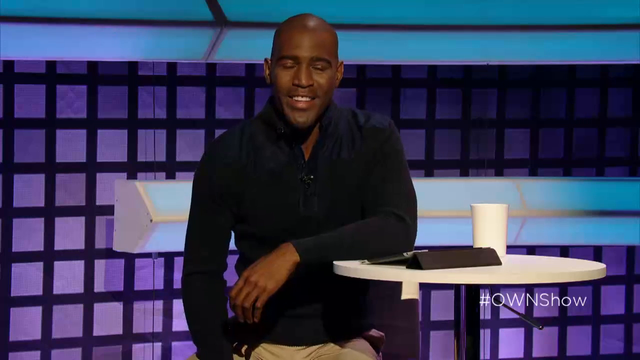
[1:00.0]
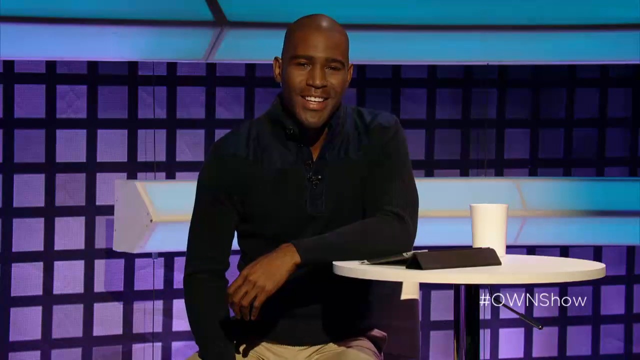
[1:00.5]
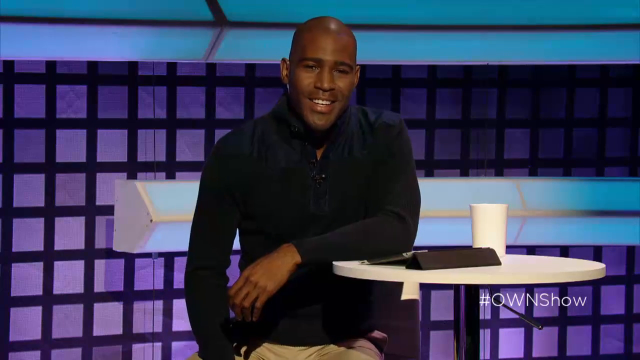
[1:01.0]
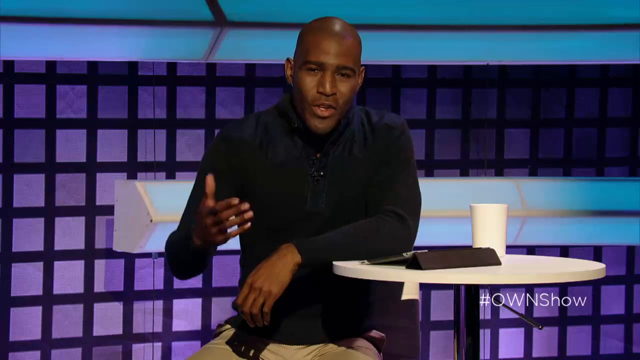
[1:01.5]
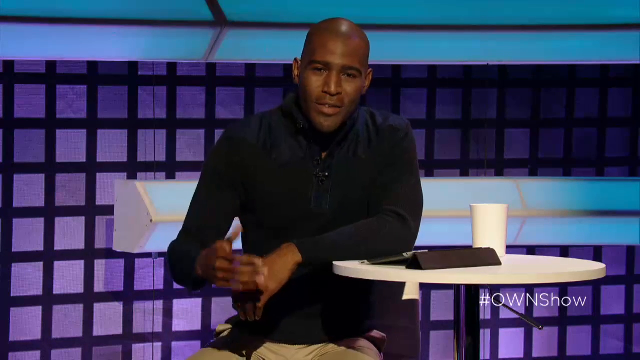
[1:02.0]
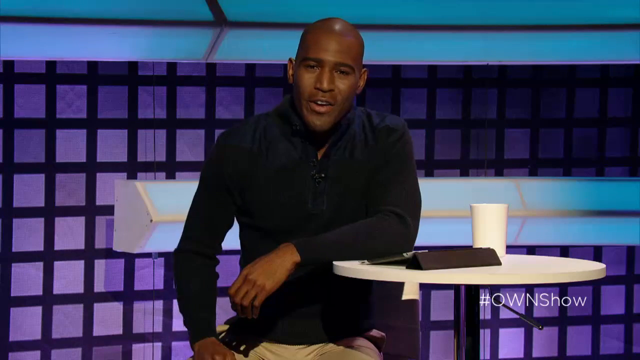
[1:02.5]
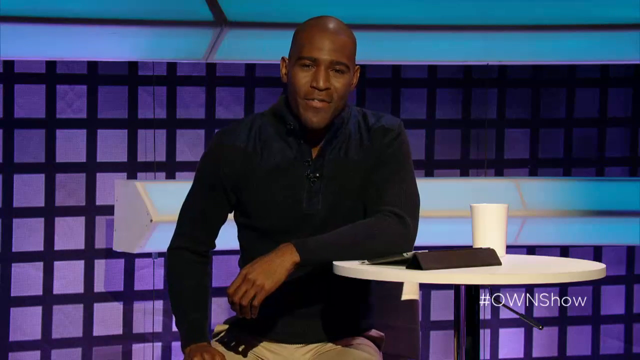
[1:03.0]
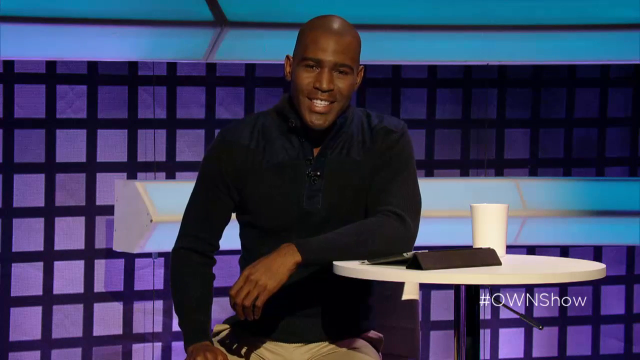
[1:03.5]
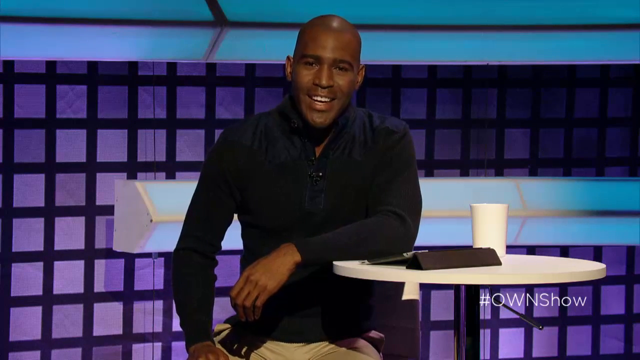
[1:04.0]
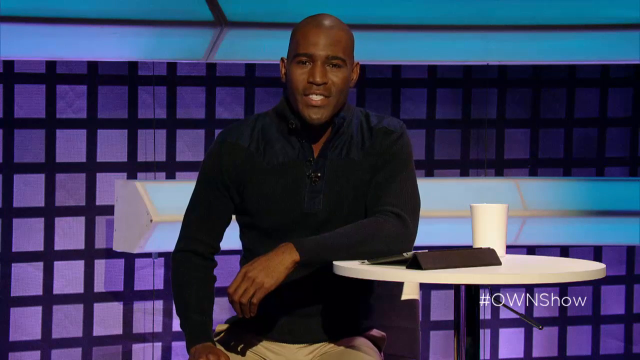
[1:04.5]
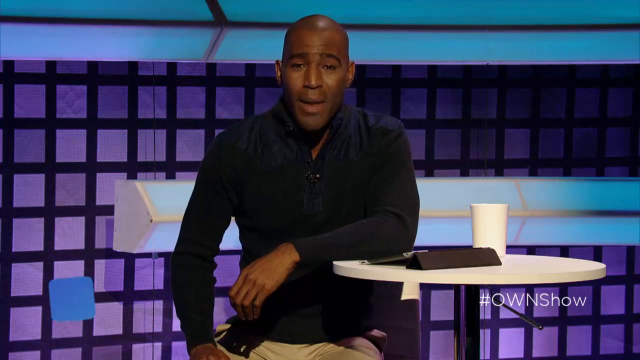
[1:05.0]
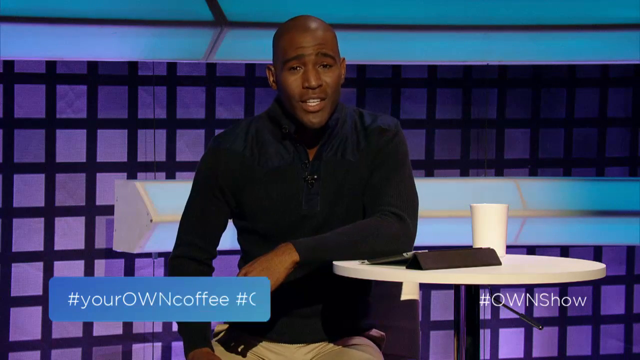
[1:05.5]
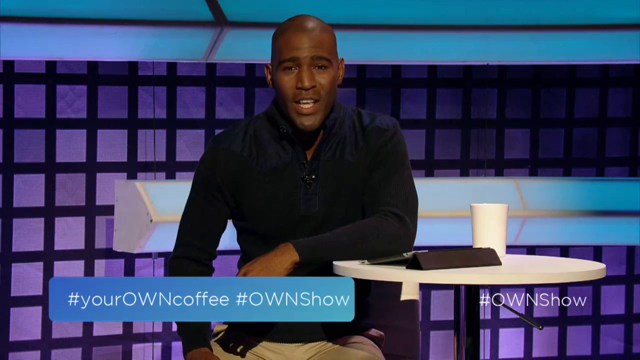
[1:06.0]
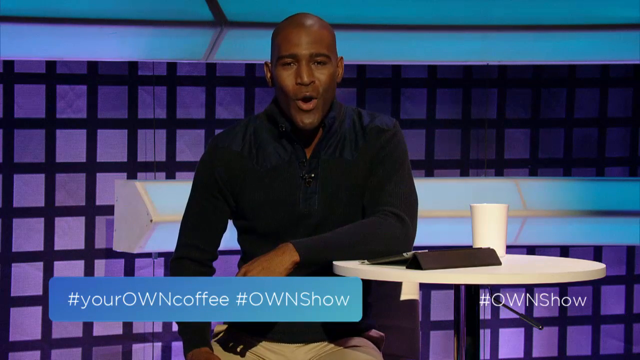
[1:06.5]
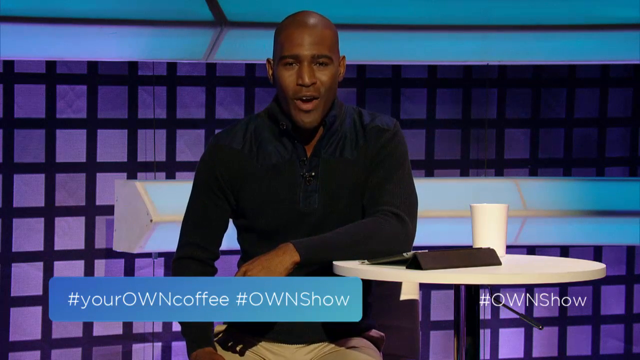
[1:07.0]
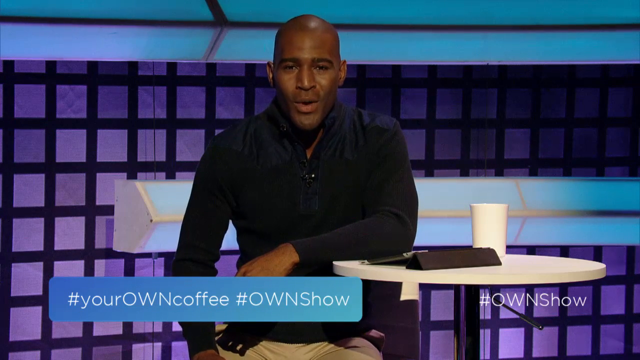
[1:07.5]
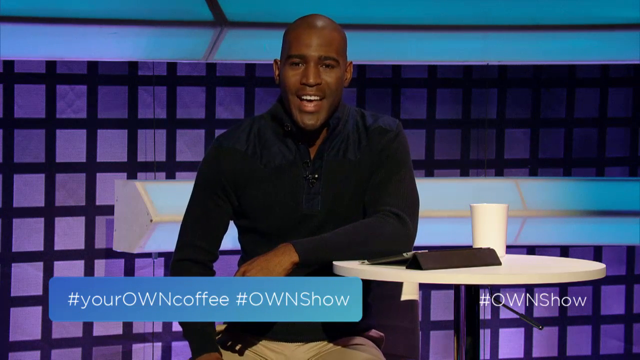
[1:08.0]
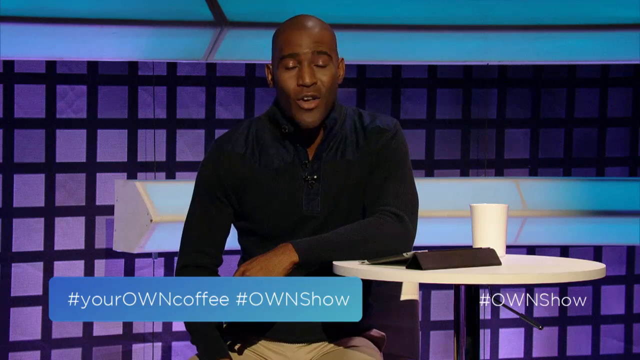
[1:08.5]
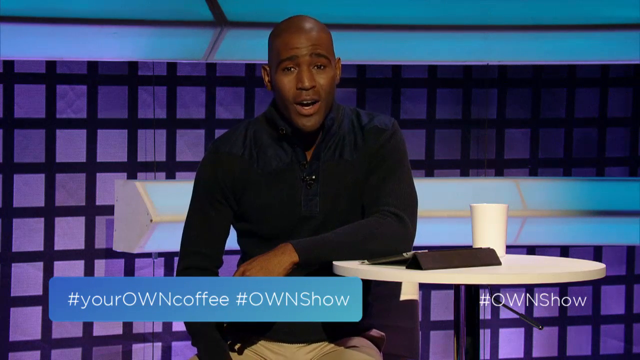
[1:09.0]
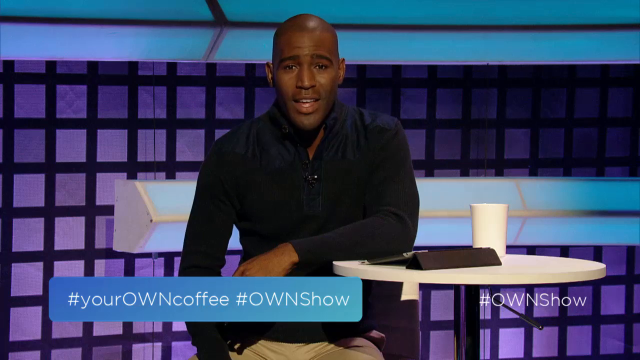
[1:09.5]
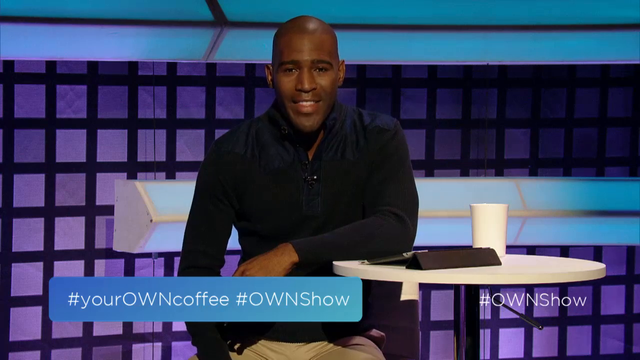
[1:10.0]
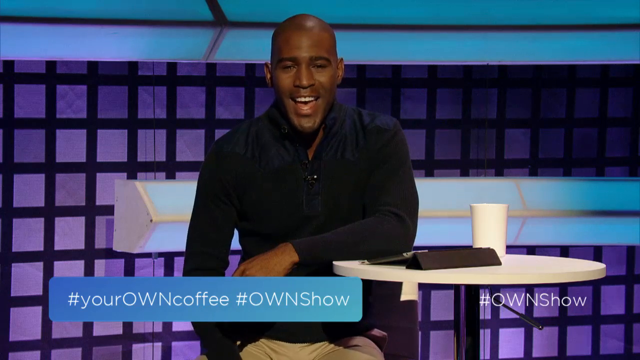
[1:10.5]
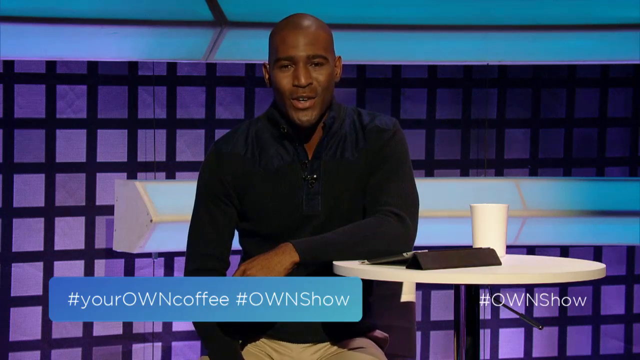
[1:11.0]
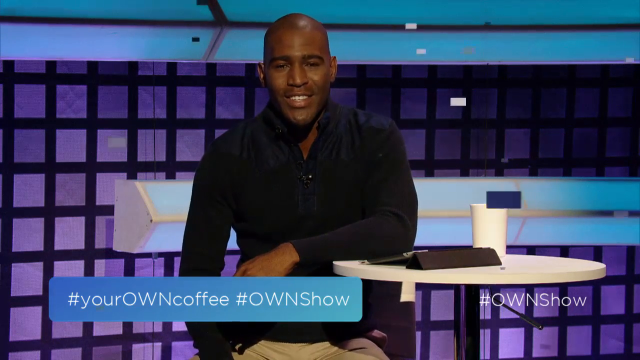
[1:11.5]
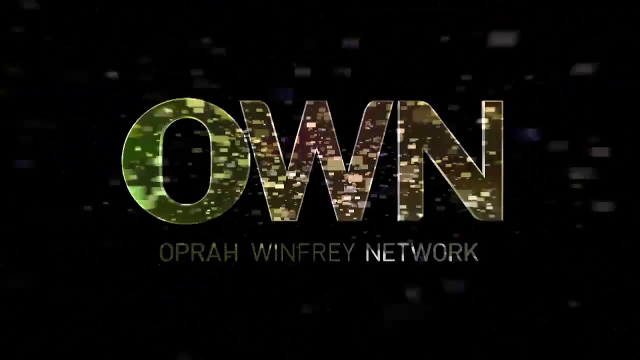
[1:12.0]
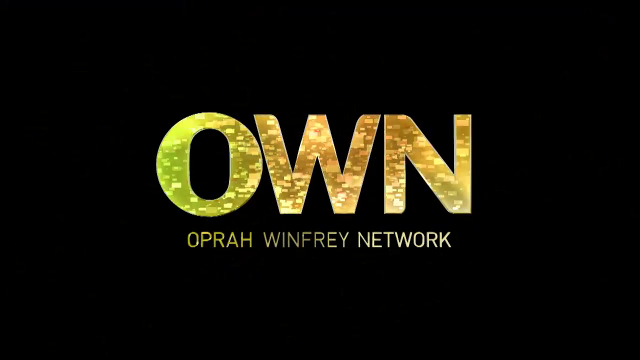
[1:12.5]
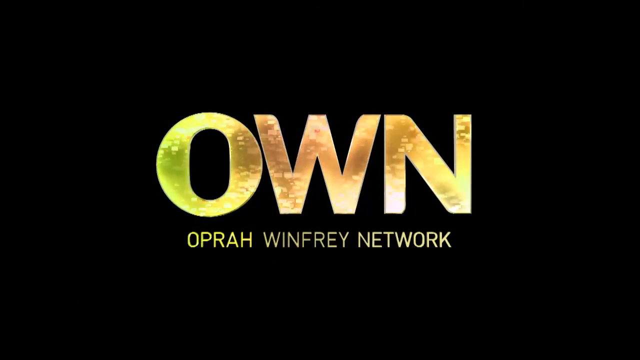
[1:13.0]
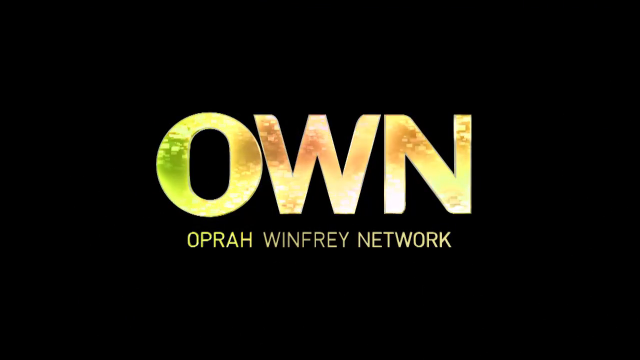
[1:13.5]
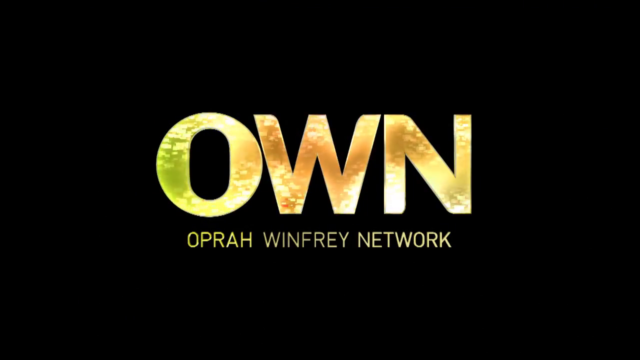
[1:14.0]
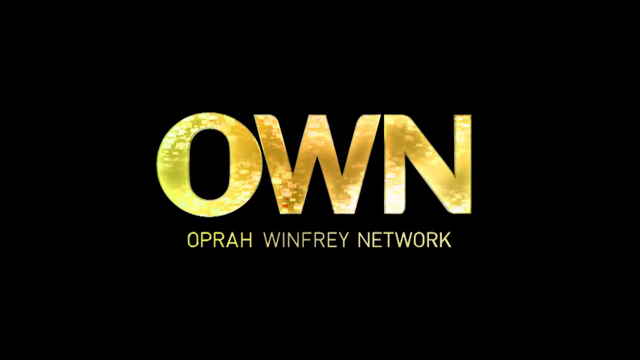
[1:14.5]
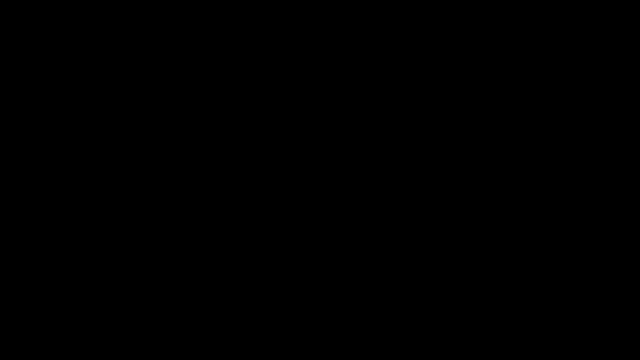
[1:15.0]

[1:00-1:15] A man talks to the camera. He wears what looks like a black button-down shirt and has a bald head. He sits at a table with a white top, on which are an iPad and a white mug. Behind him are what look like purple squares on a screen and some blue lights. He continues talking directly to the camera throughout the shot. As he talks, a blue bubble appears containing the hashtags "#your own coffee" and "#own show." The video ends showing "own Oprah Winfrey Network."